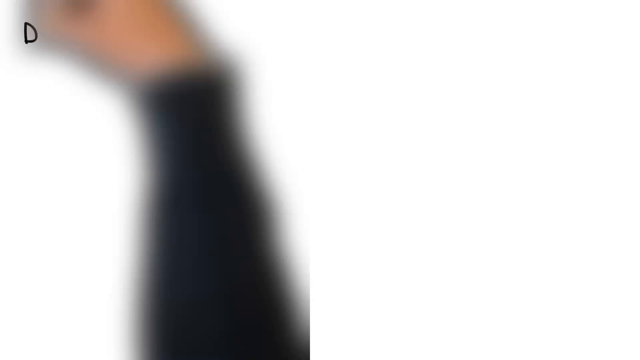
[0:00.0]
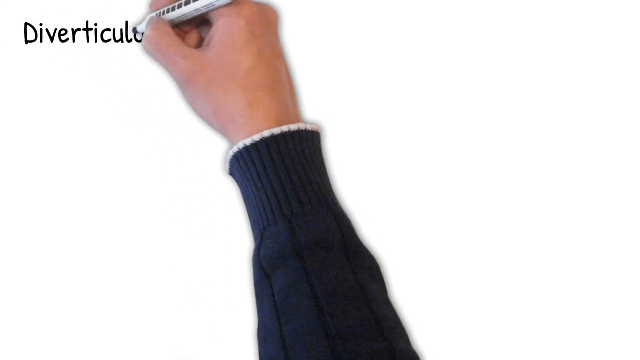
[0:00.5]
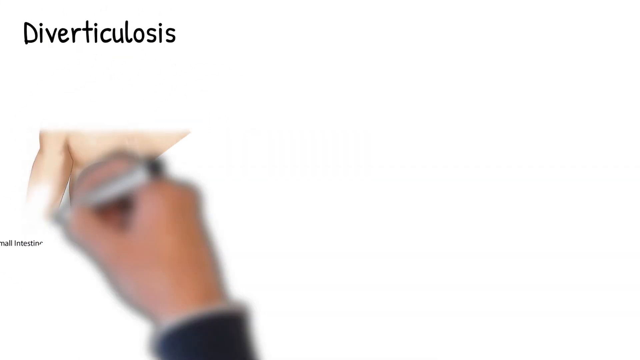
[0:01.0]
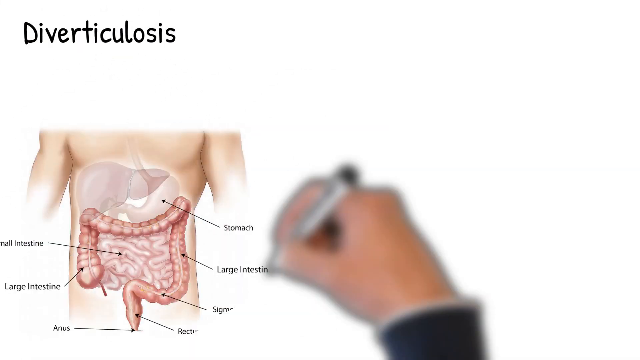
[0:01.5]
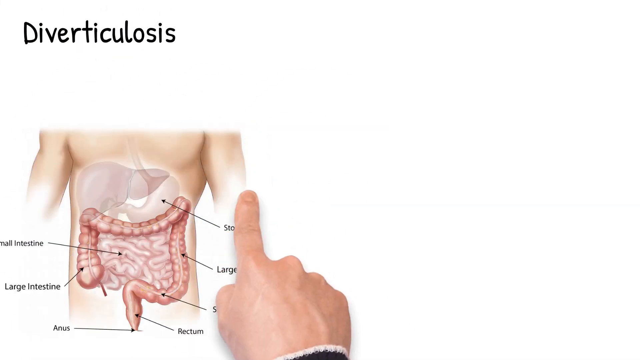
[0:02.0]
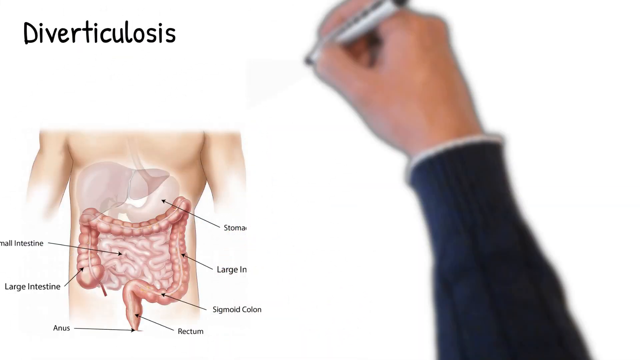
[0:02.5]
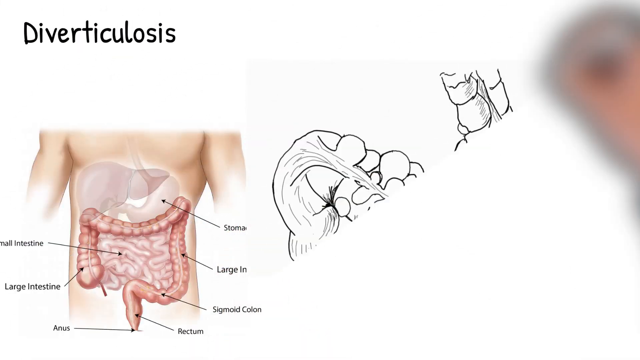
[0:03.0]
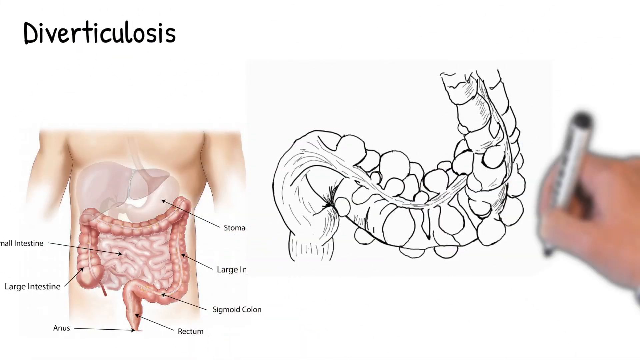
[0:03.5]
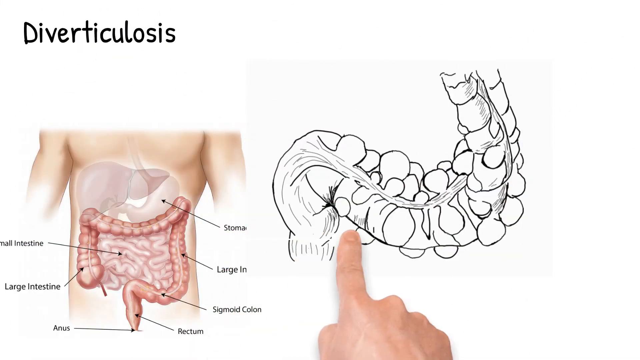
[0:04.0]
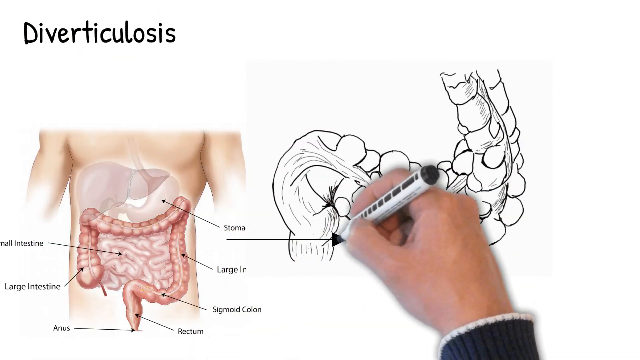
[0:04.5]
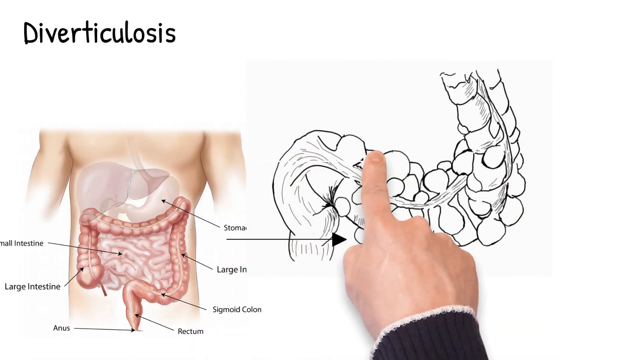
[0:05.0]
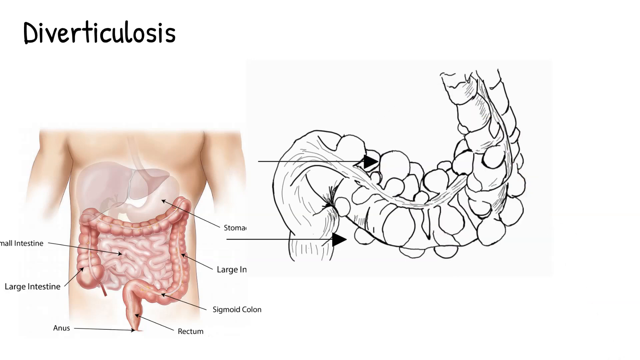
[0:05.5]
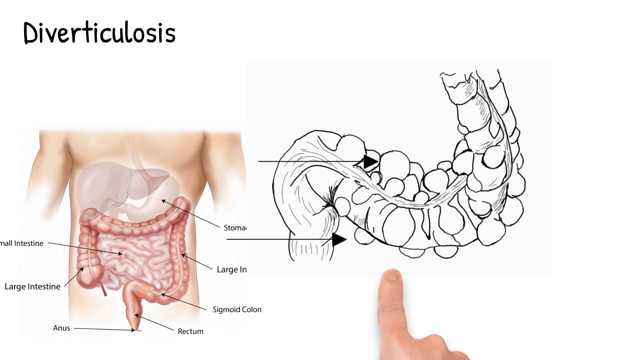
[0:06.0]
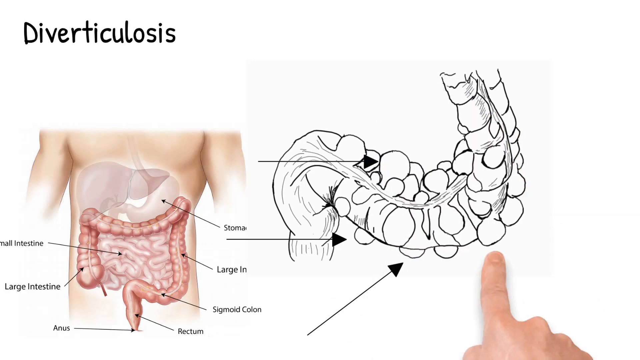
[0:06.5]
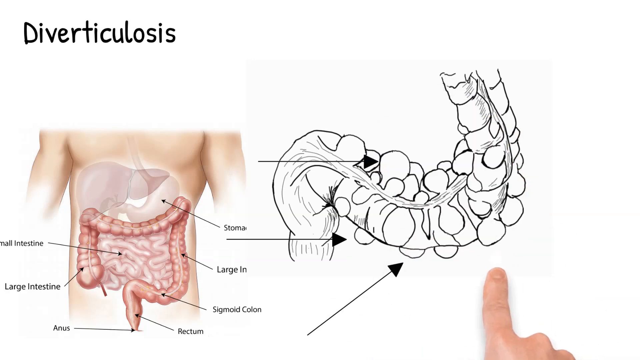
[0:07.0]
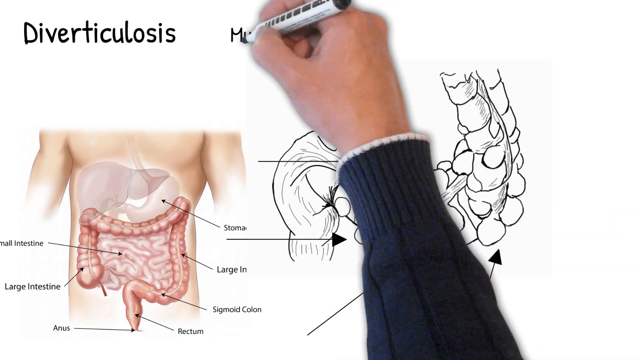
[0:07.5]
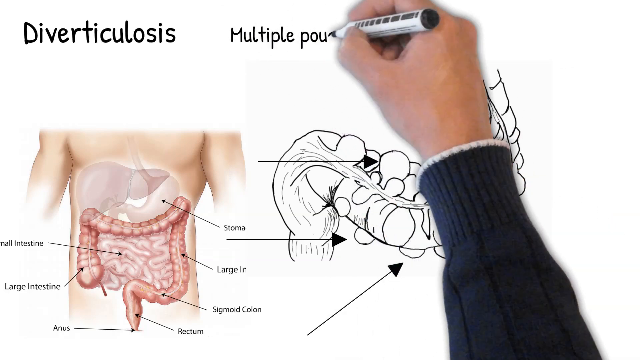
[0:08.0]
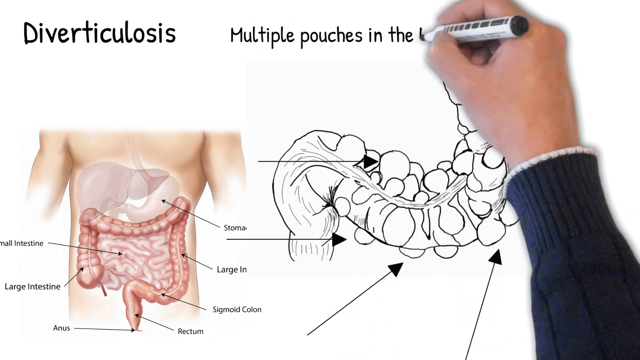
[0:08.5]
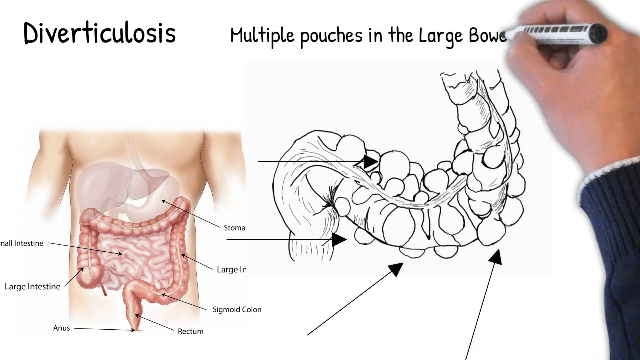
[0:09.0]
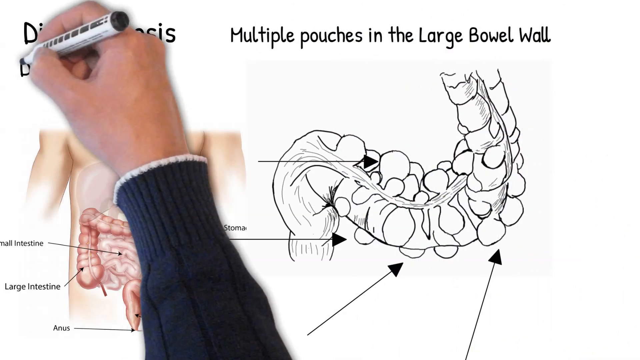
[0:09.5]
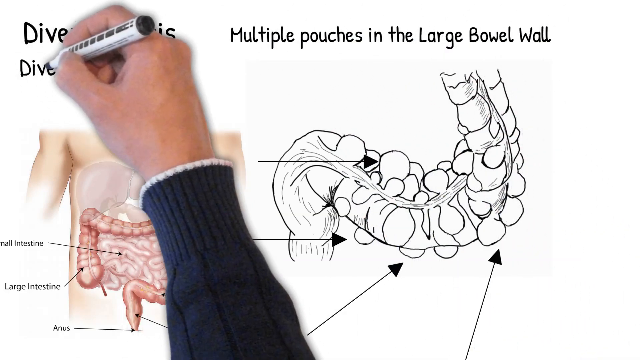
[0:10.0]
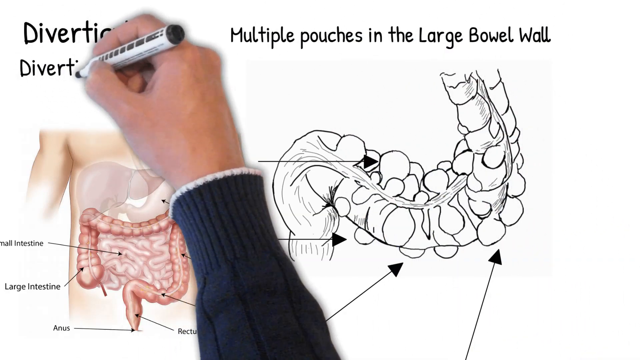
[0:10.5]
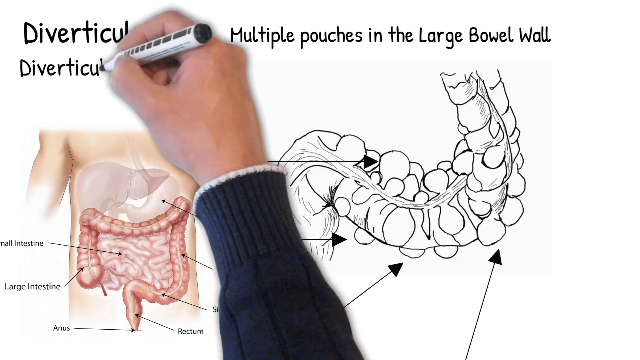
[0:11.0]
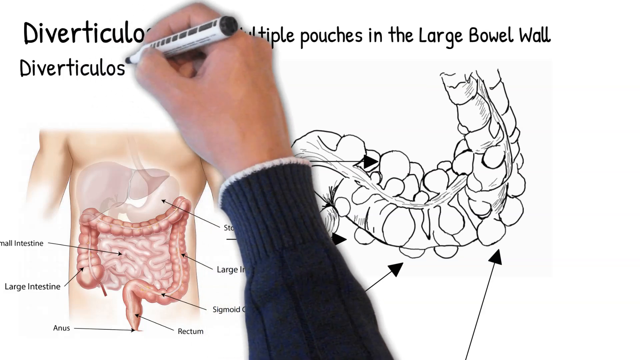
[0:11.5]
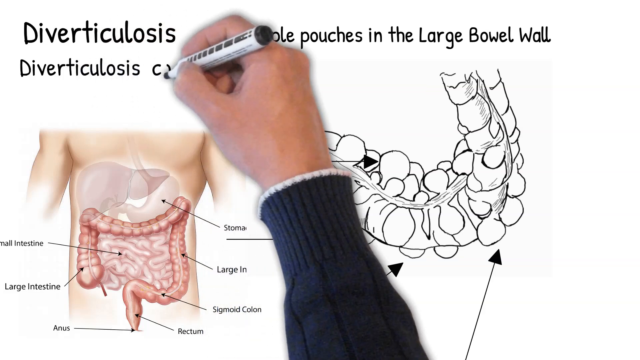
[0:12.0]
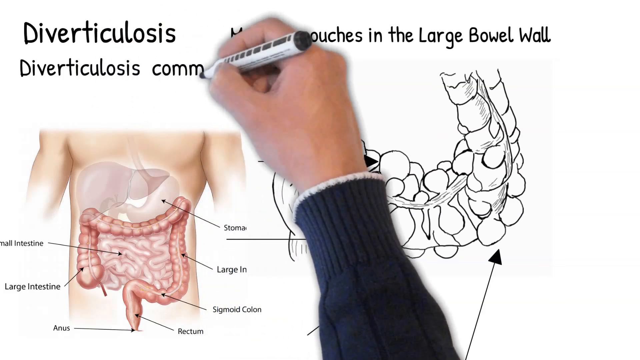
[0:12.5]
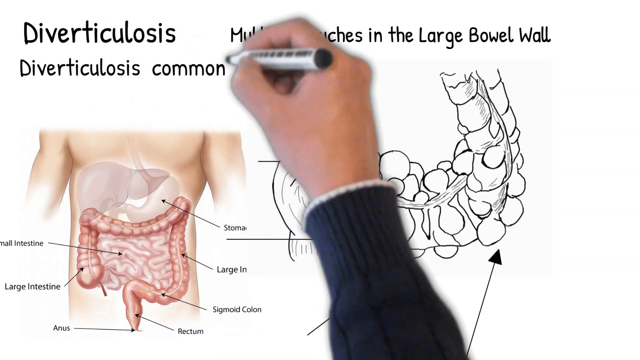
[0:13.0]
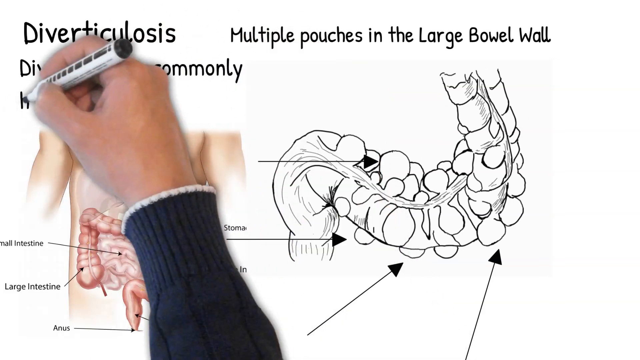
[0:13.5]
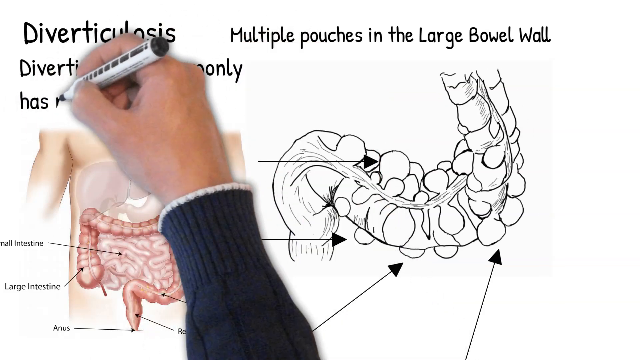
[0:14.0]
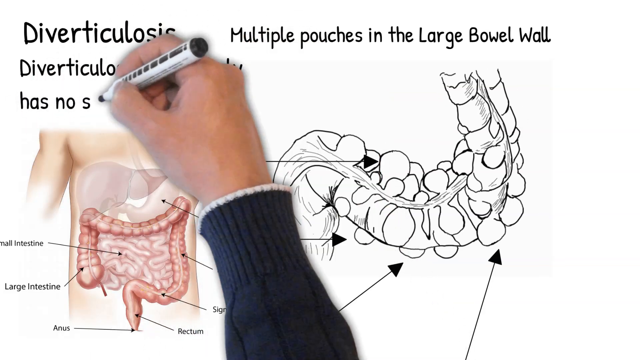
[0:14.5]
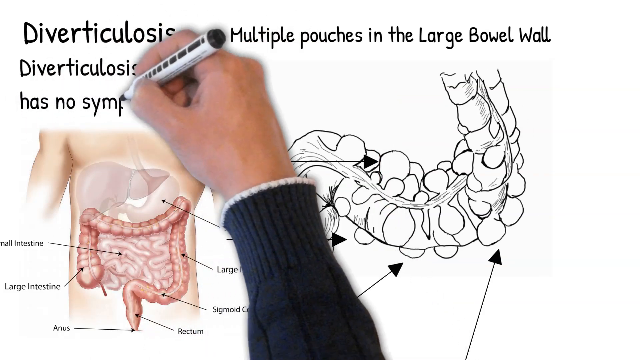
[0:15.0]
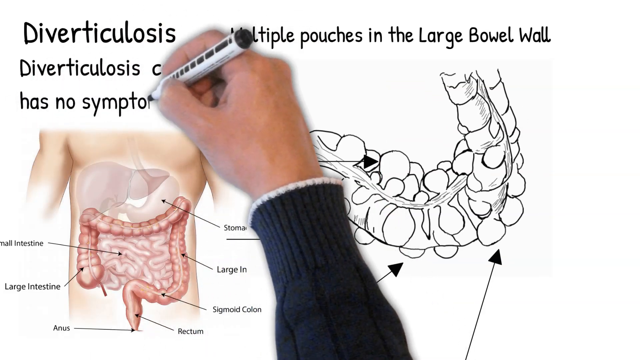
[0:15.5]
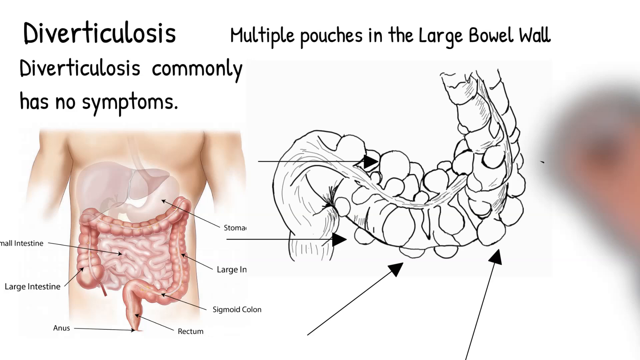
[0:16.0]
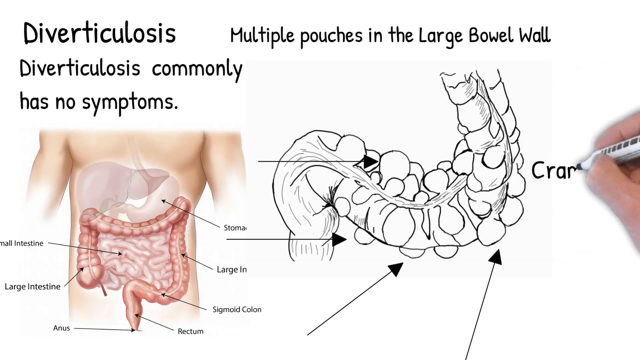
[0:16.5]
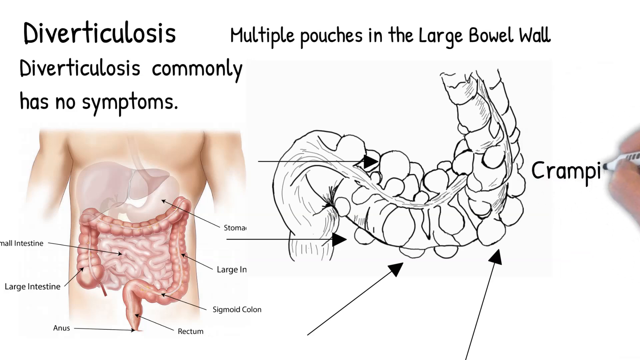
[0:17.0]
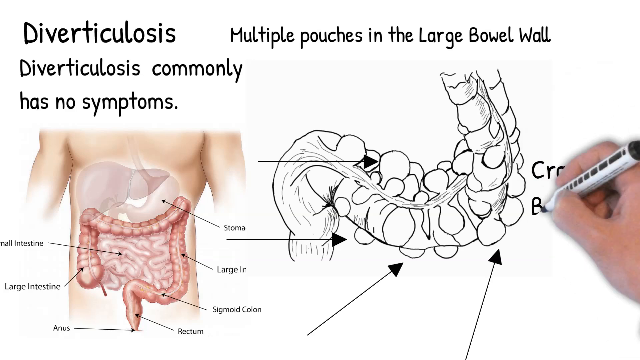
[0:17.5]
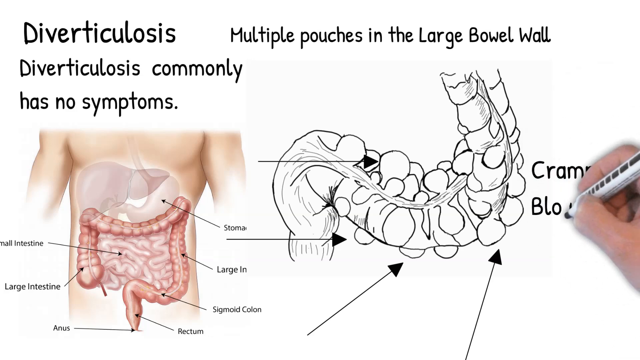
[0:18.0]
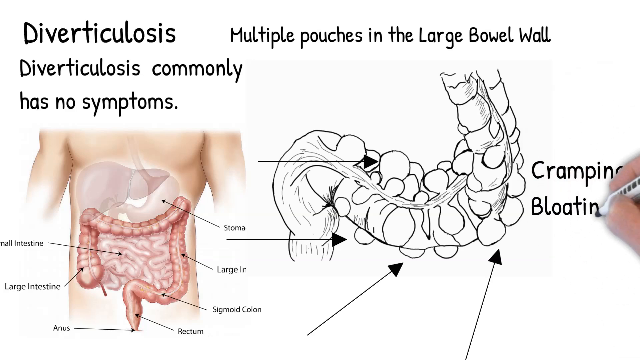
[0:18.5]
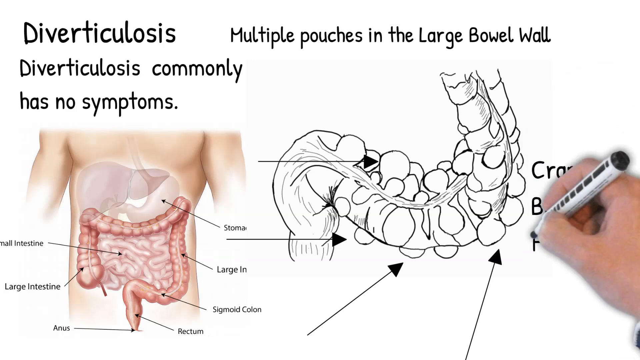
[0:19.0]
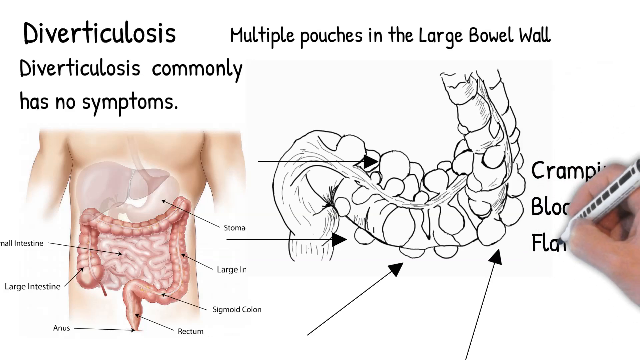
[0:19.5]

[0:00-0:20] The video is about diverticulitis. Against a white background, a hand in a black sleeve draws the word "diverticulitis" and then a picture of a person's stomach area, drawing lines that point to different parts of a diagram: the small intestines, the large intestines, a stoma, the sigmoid colon and the rectum. The lines then point to parts closer in on the large intestines, and the text says diverticulitis is "multiple pouches in the large bowel wall" and "It commonly has no symptoms."